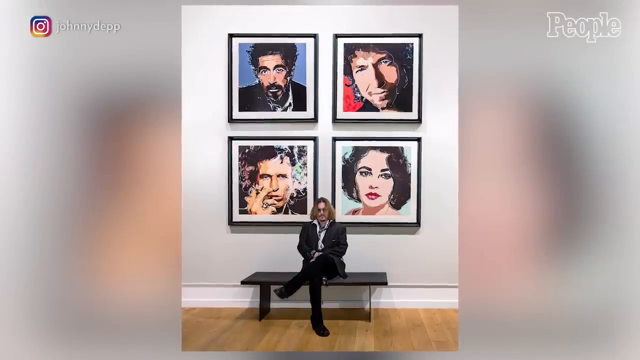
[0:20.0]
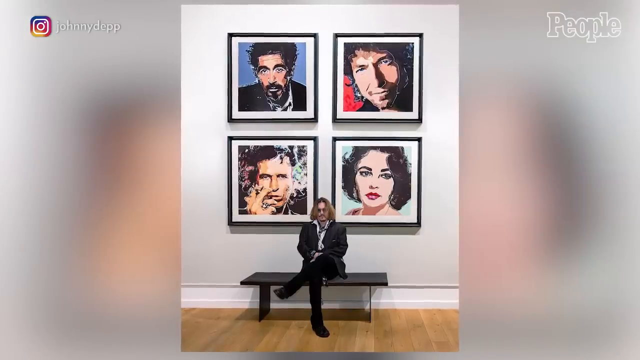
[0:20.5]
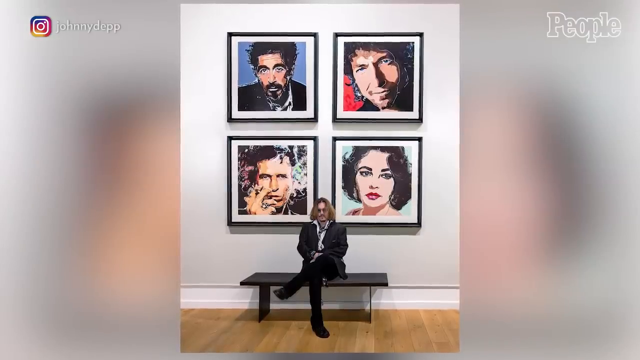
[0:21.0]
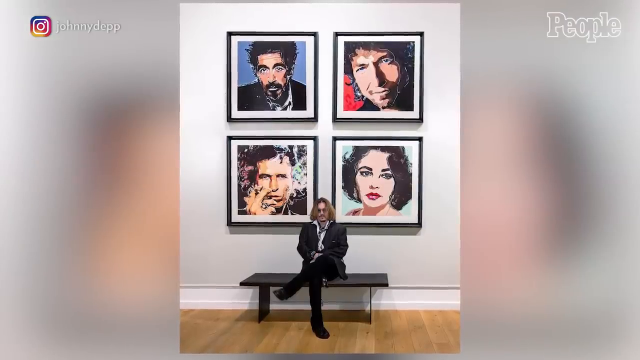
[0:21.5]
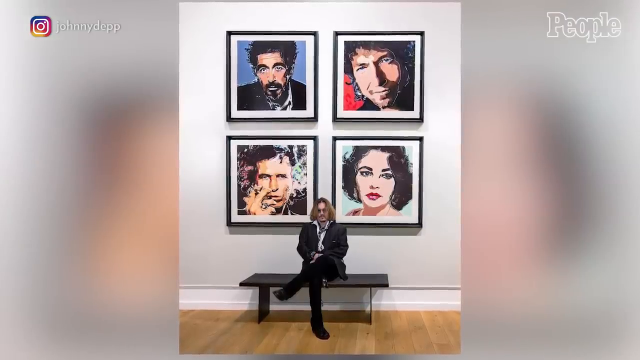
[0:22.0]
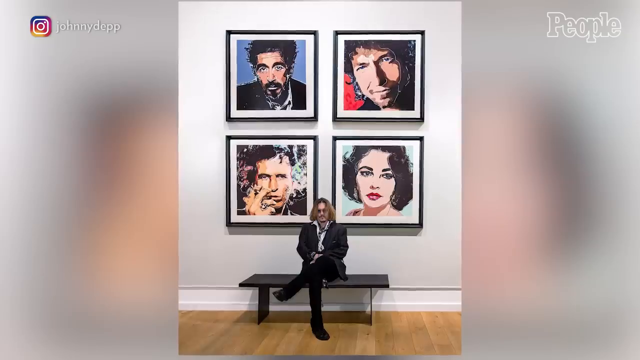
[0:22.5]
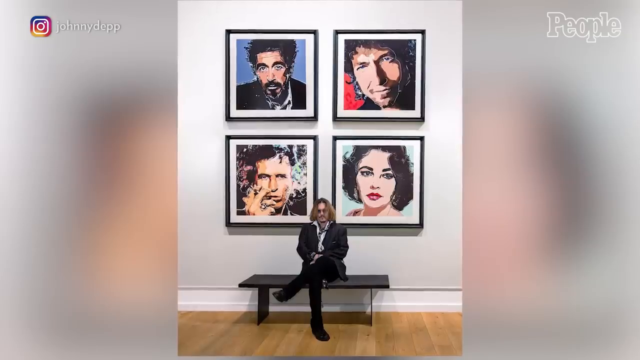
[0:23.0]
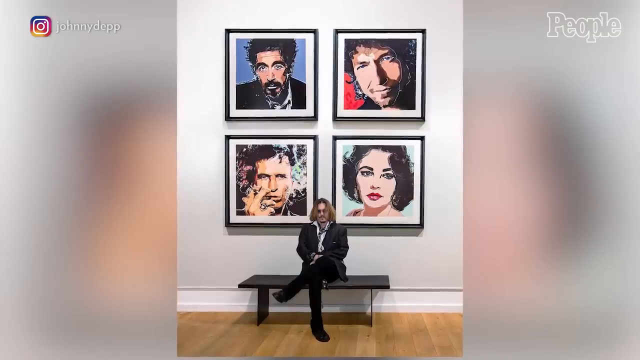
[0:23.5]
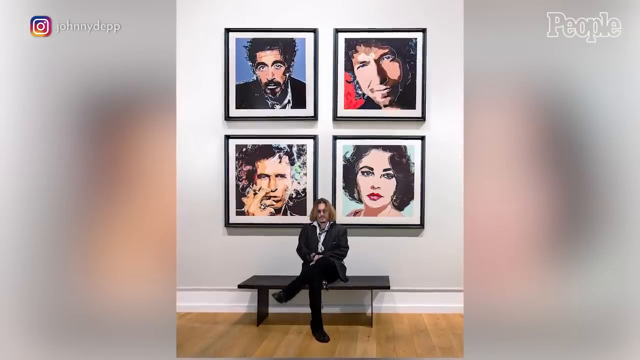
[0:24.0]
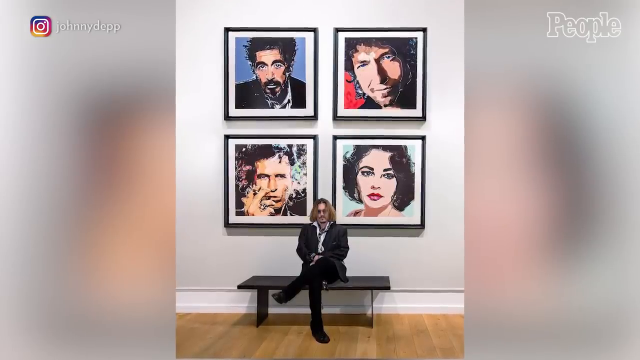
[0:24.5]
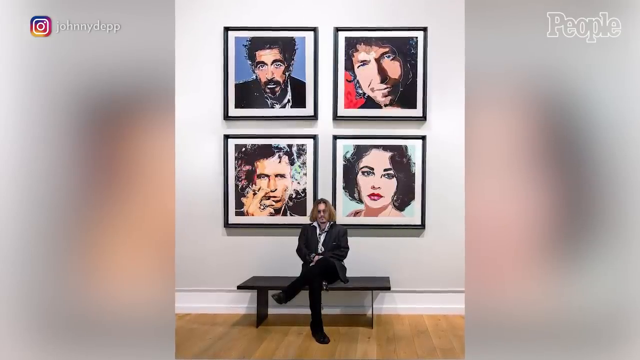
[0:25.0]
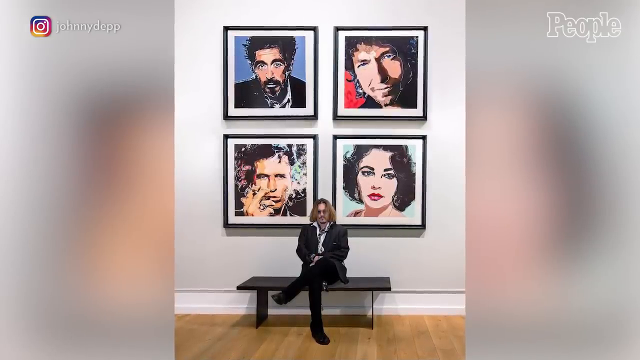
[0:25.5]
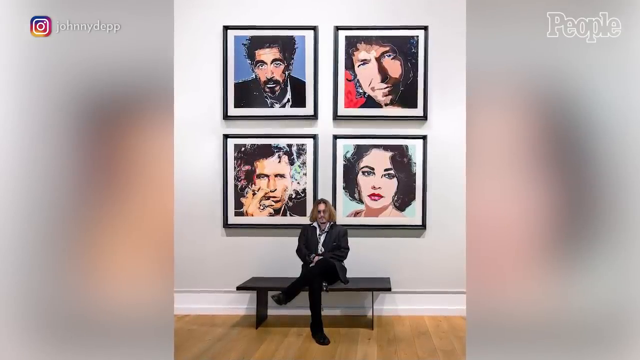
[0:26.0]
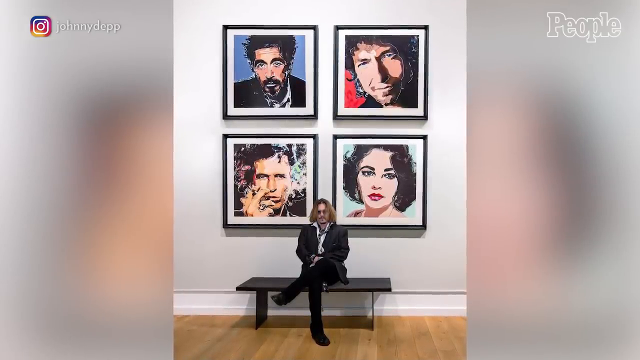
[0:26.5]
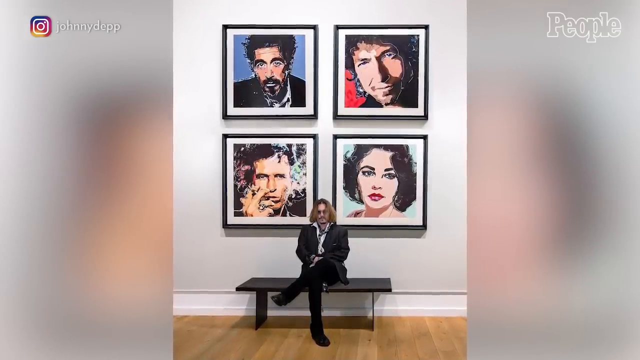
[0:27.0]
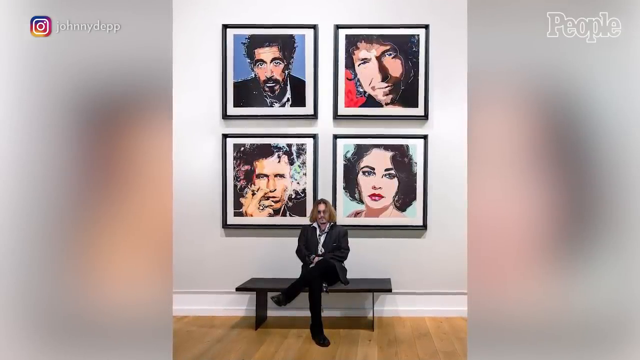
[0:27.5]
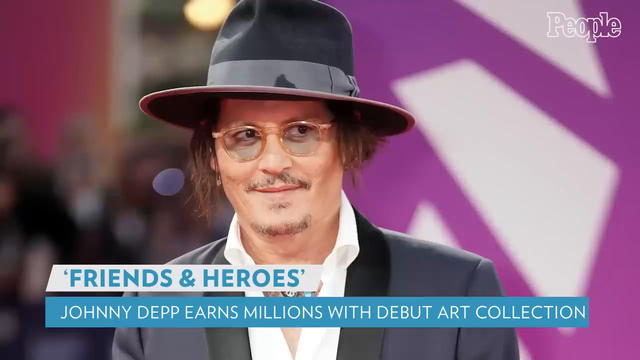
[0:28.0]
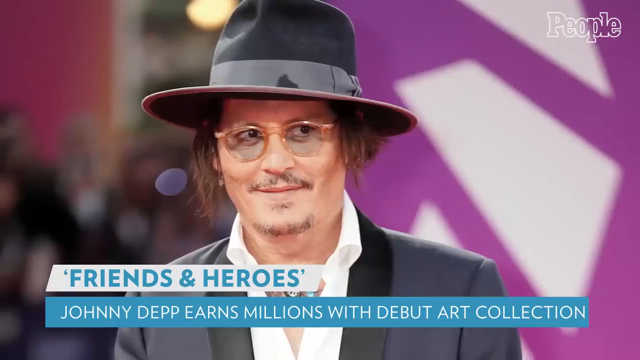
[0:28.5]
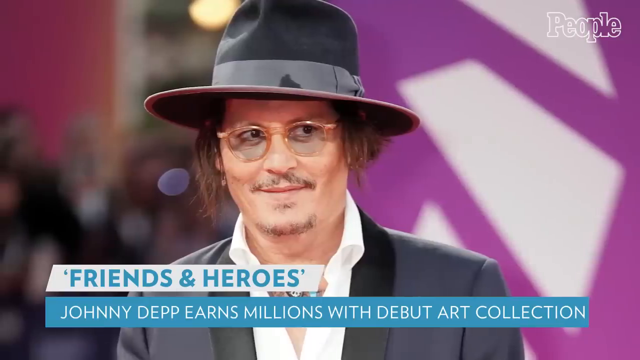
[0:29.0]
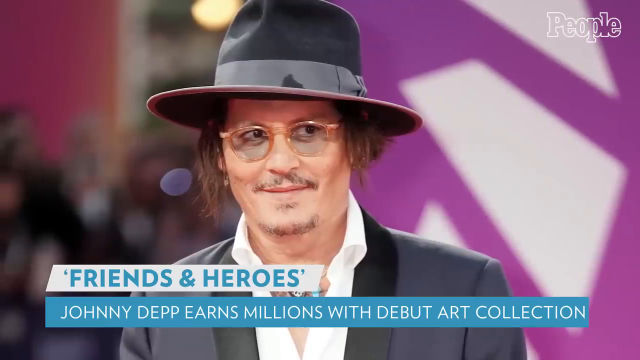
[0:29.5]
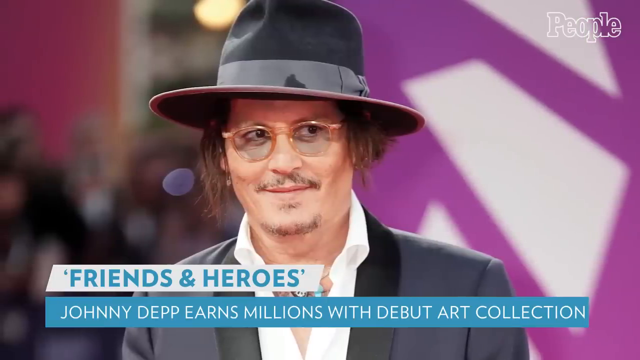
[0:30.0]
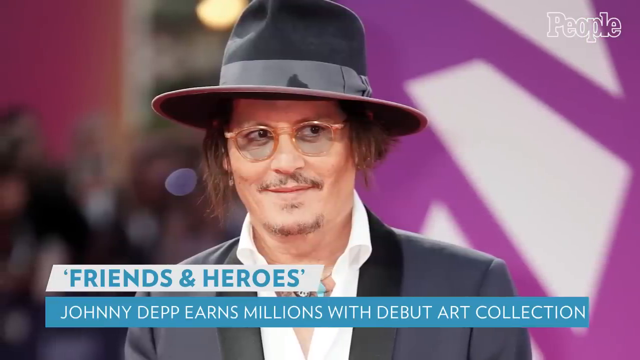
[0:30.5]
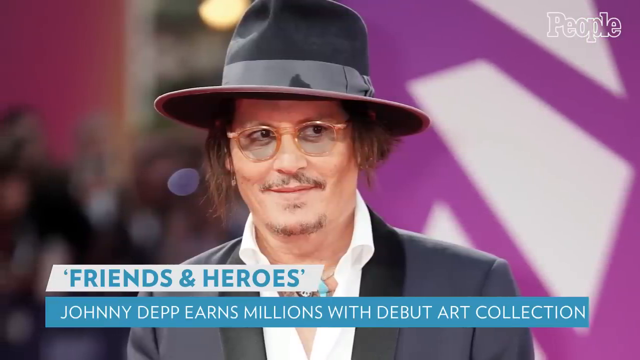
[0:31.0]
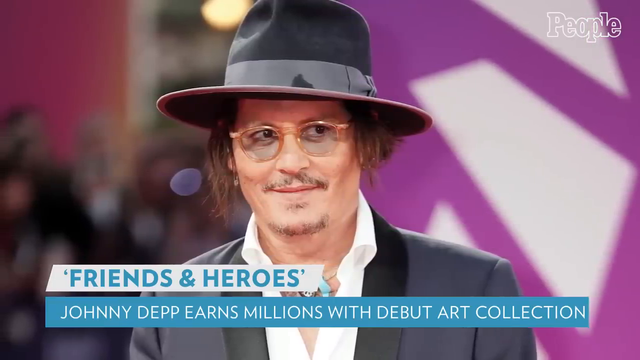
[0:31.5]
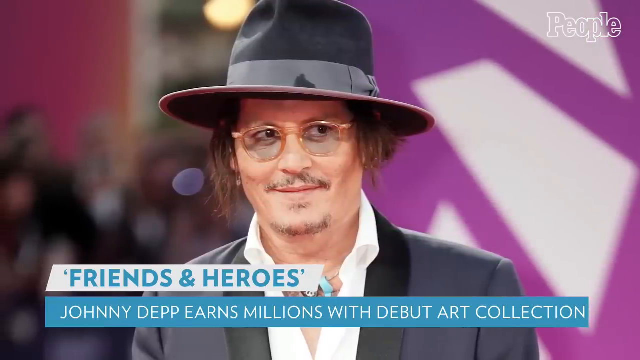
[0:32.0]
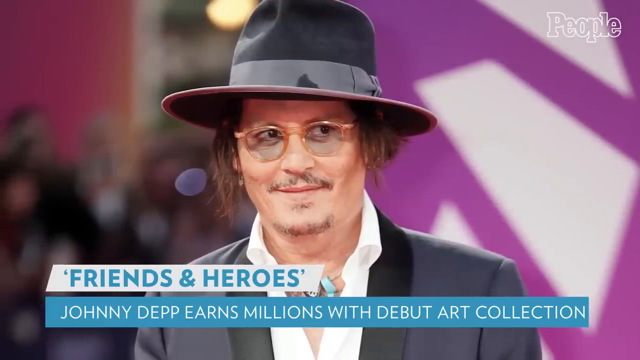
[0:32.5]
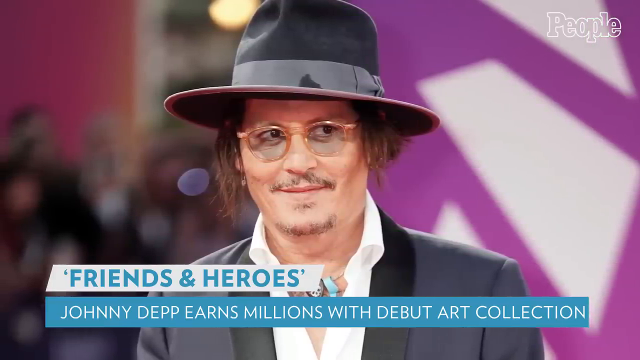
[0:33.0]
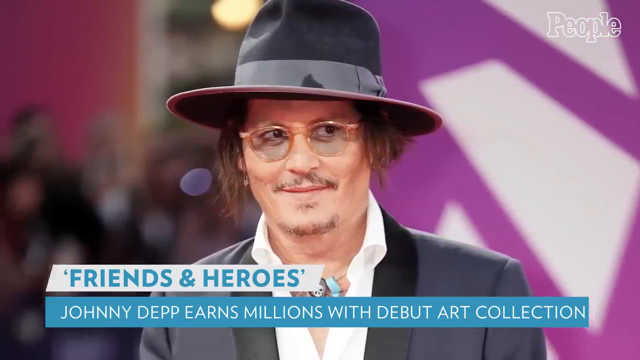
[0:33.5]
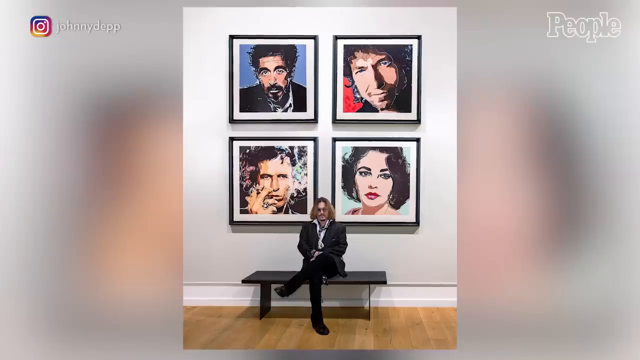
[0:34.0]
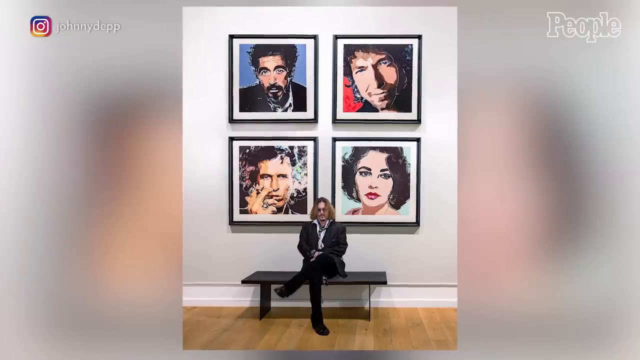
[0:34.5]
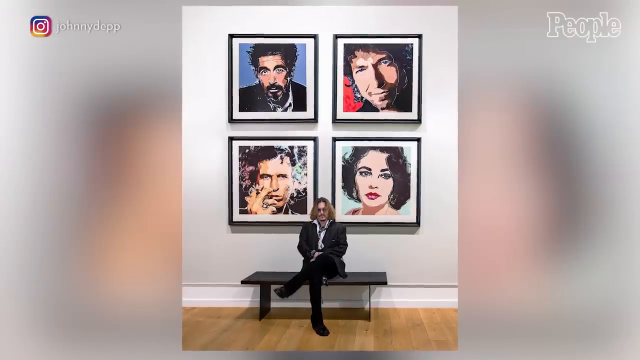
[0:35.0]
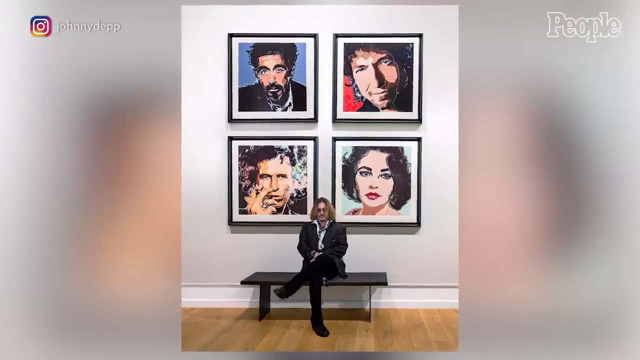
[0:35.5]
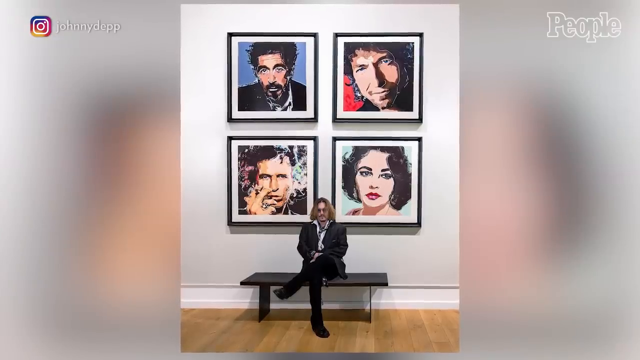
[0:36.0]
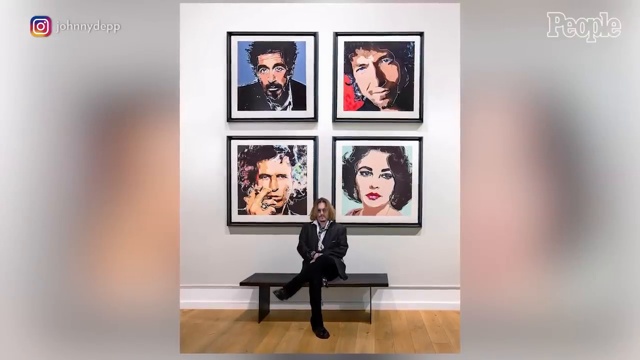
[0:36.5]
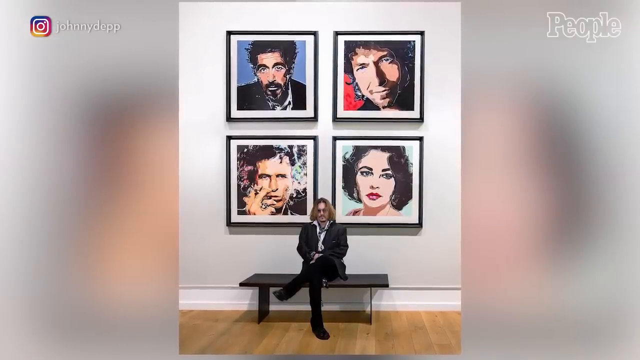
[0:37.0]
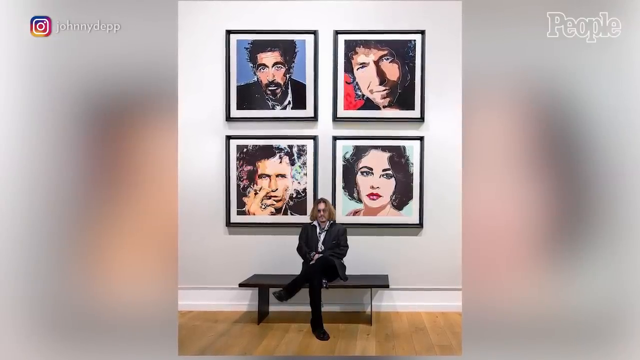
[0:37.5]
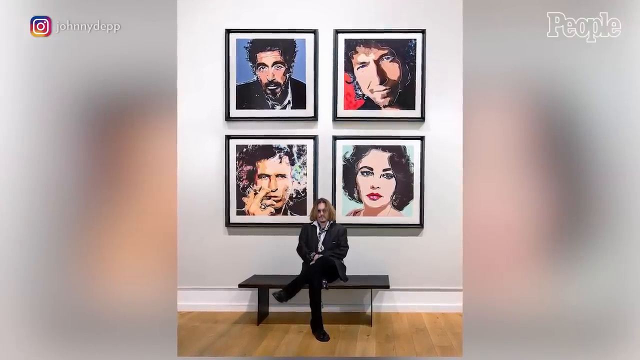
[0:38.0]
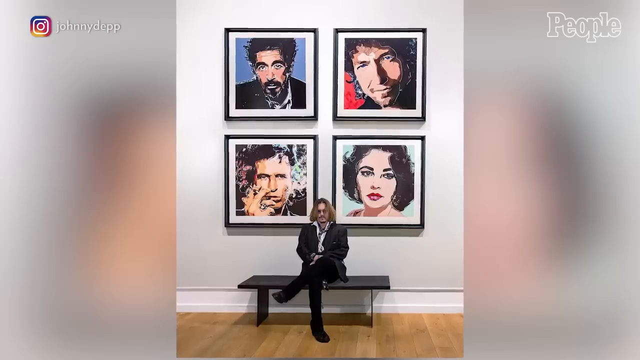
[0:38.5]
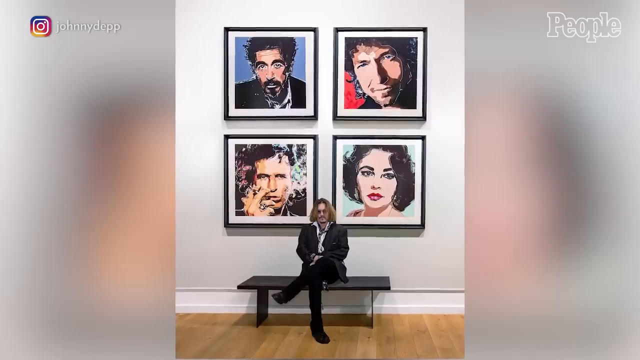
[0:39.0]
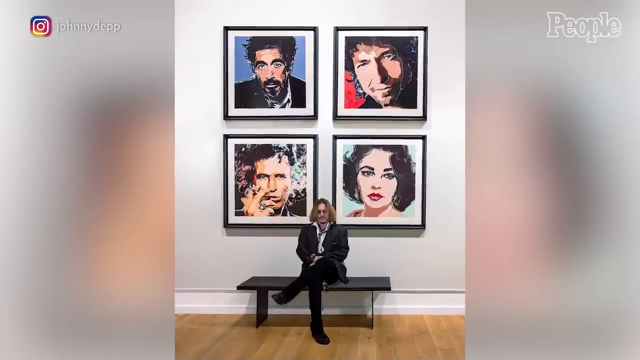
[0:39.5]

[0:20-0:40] A man in a black suit sits on a black bench, looking forward. Behind him is a white wall with four pictures arranged in a square, each a different photograph of people. The next image shows a man in a gray suit with black trim and a black hat with gray trim, looking forward and wearing glasses, with a purple banner behind him. At the bottom, a white label with blue writing reads "friends and heroes," and below it a blue banner with white writing reads "Johnny Depp earns millions with debut art collection." The same image then moves slightly to the right of the screen. The word "people" appears in the upper right corner.